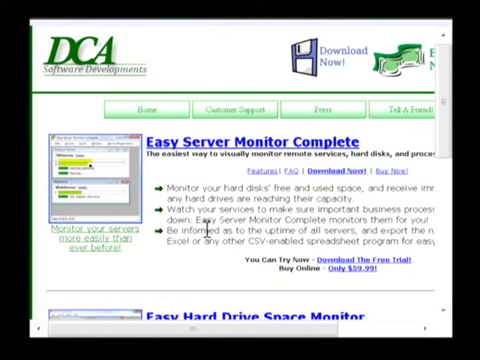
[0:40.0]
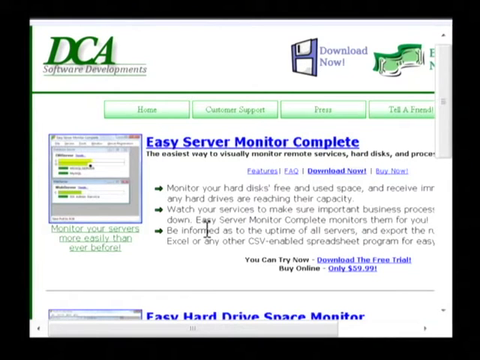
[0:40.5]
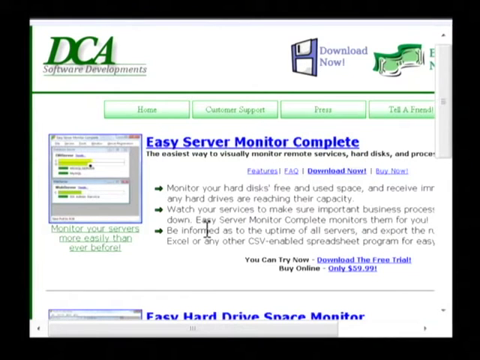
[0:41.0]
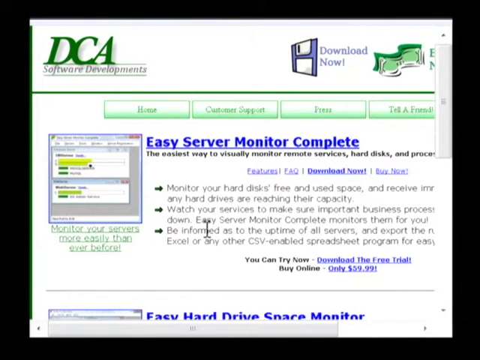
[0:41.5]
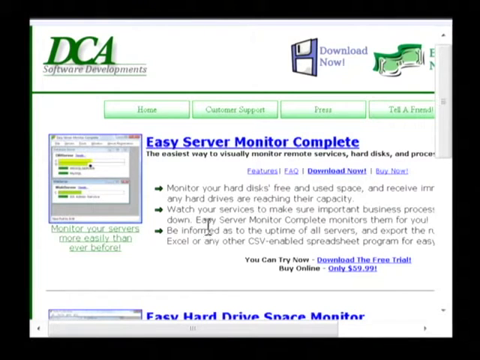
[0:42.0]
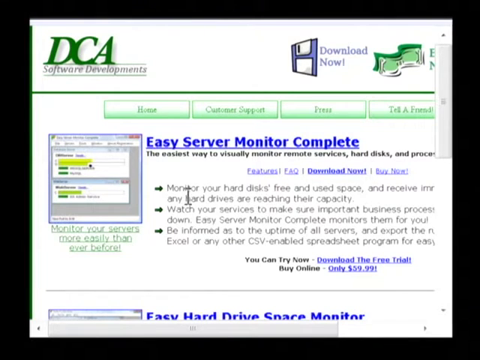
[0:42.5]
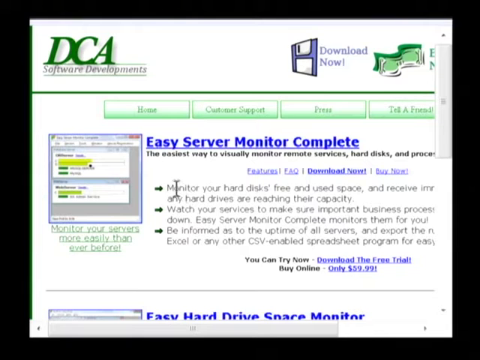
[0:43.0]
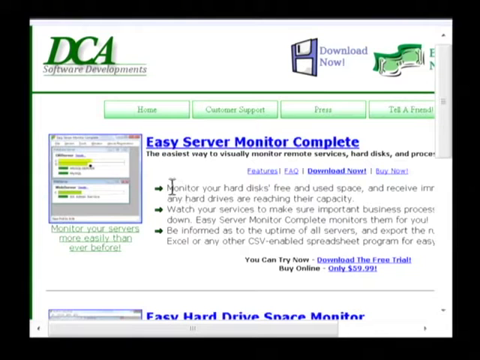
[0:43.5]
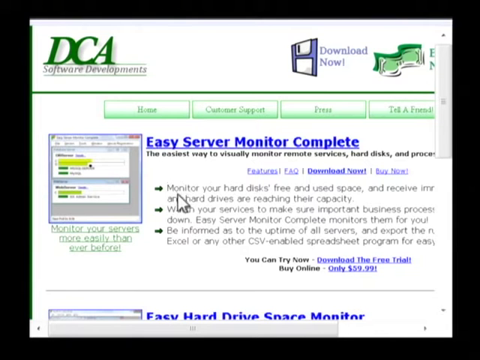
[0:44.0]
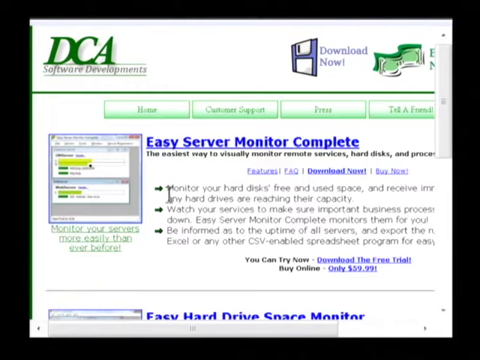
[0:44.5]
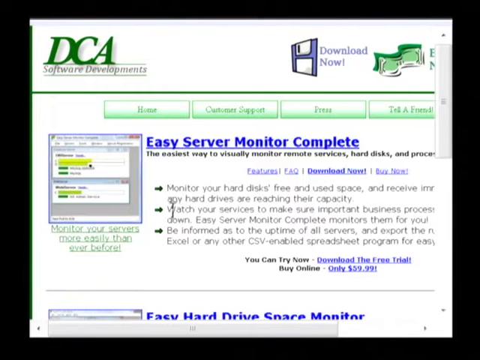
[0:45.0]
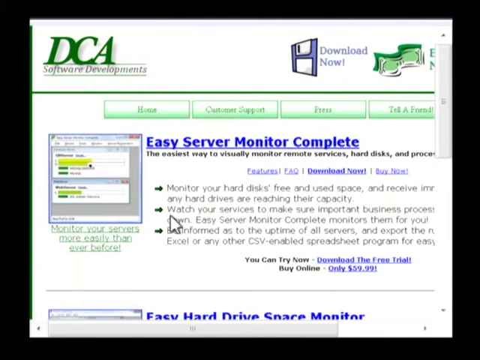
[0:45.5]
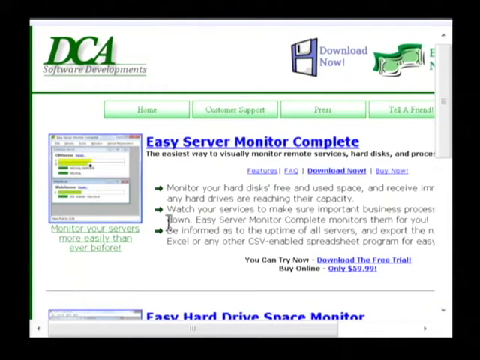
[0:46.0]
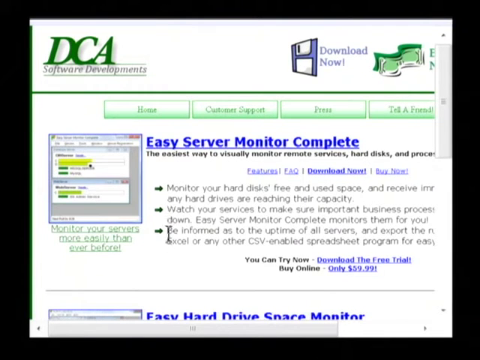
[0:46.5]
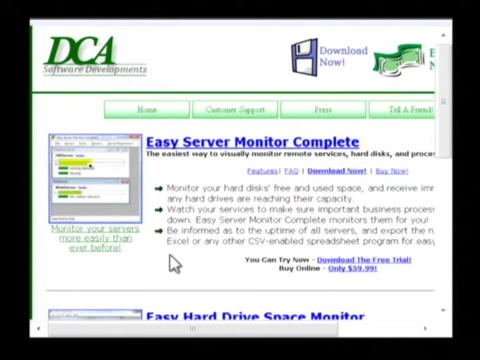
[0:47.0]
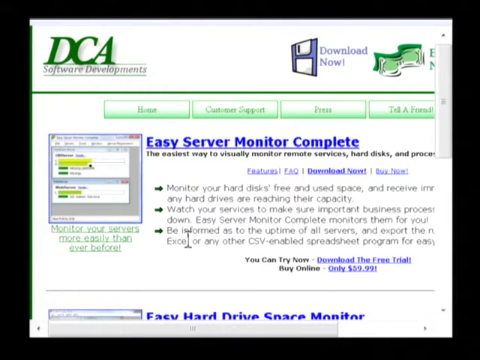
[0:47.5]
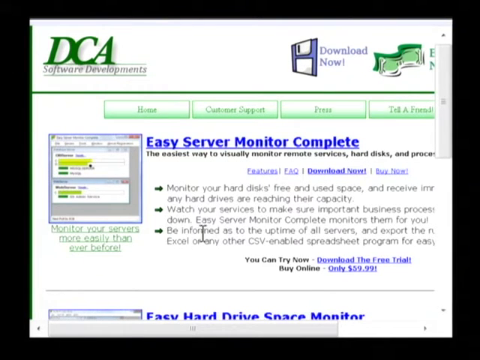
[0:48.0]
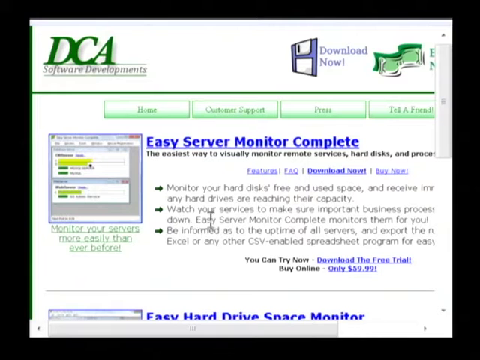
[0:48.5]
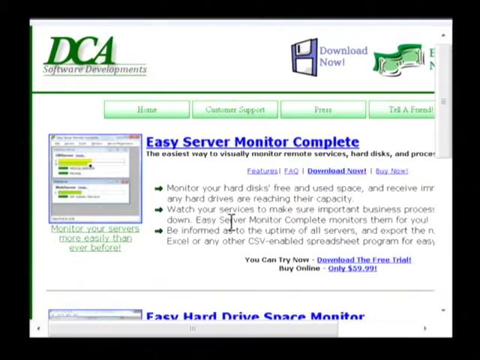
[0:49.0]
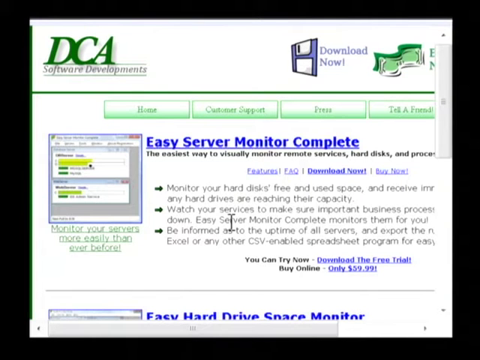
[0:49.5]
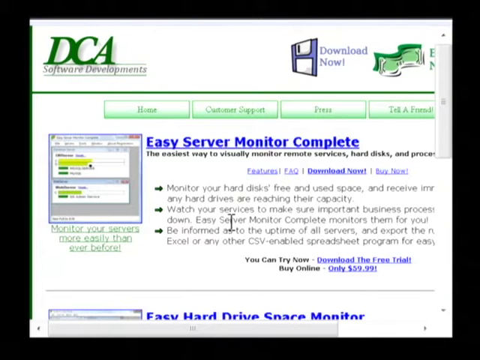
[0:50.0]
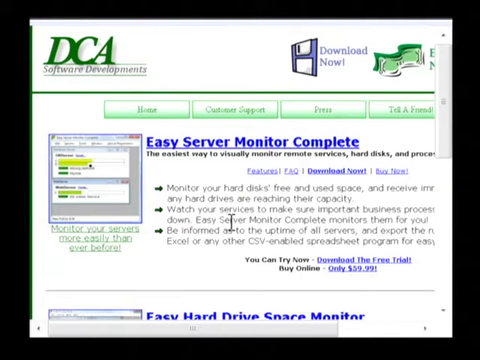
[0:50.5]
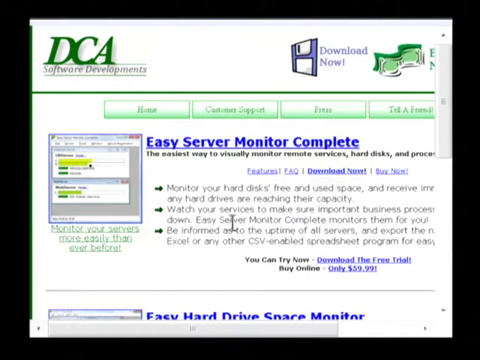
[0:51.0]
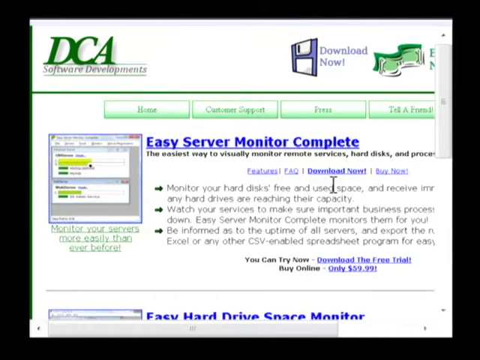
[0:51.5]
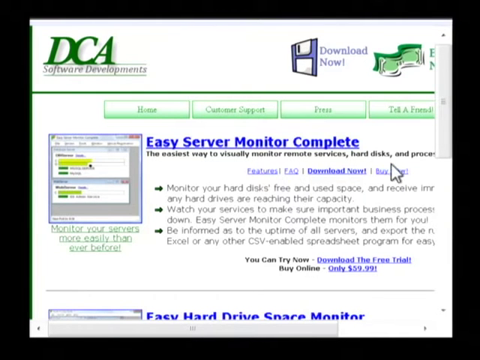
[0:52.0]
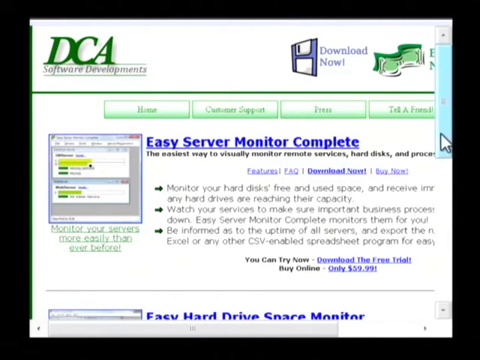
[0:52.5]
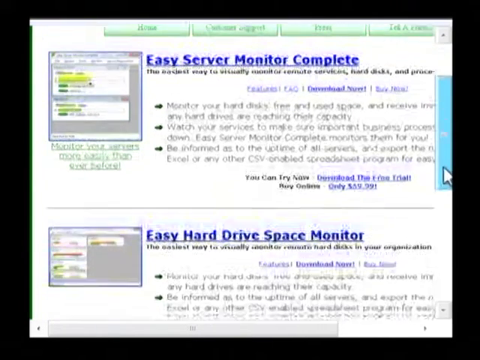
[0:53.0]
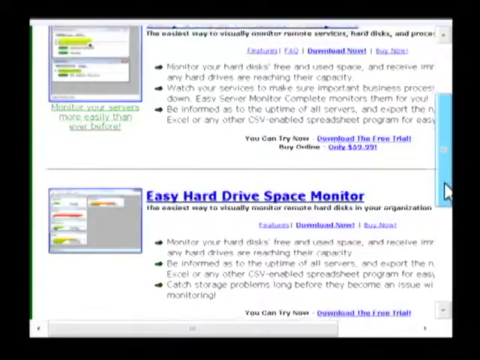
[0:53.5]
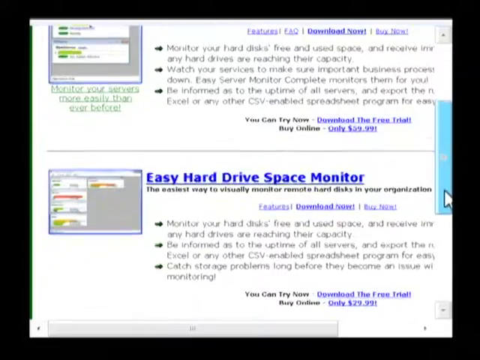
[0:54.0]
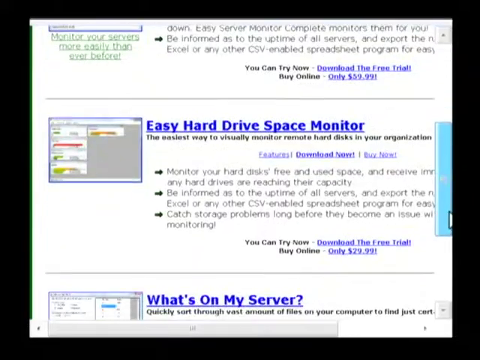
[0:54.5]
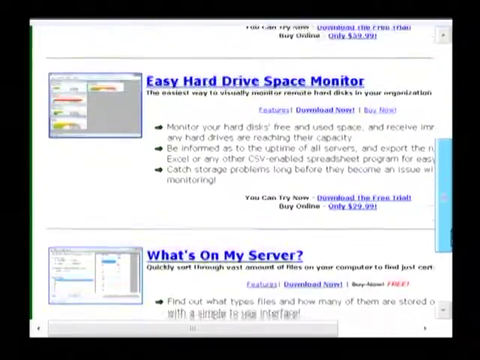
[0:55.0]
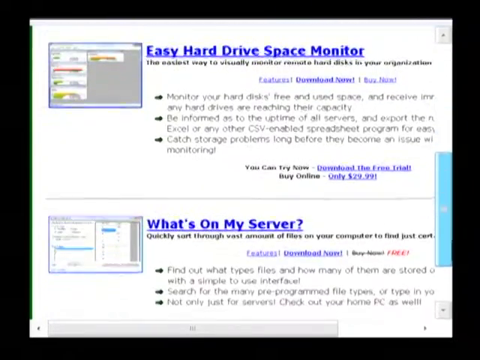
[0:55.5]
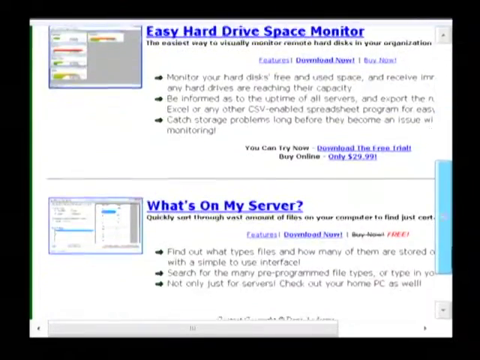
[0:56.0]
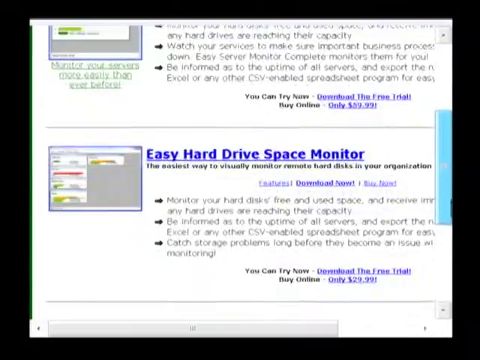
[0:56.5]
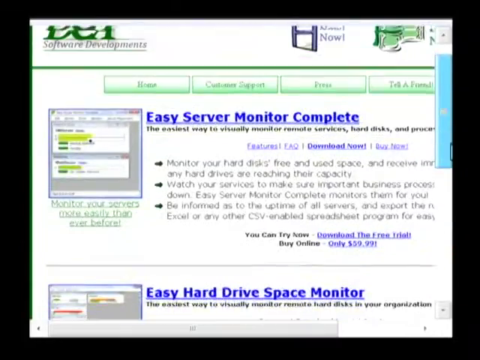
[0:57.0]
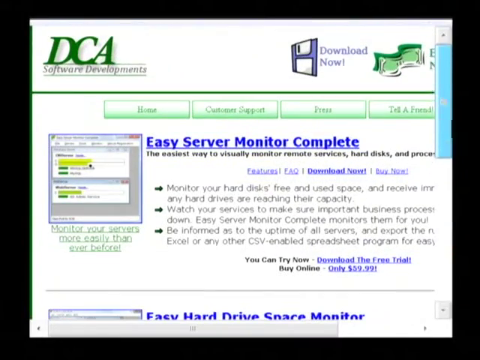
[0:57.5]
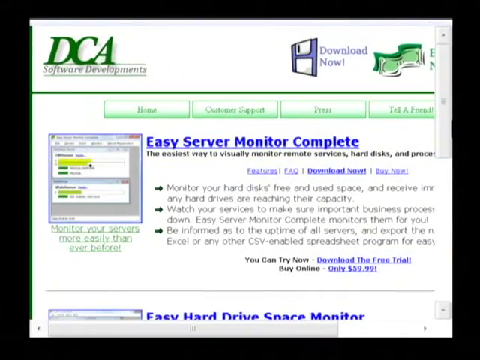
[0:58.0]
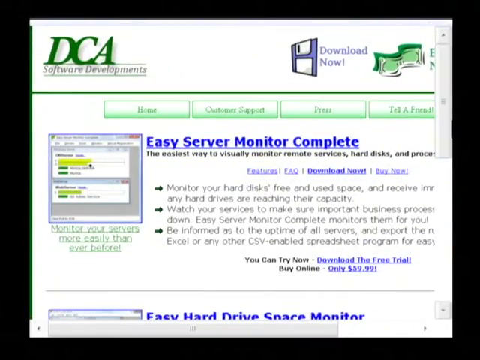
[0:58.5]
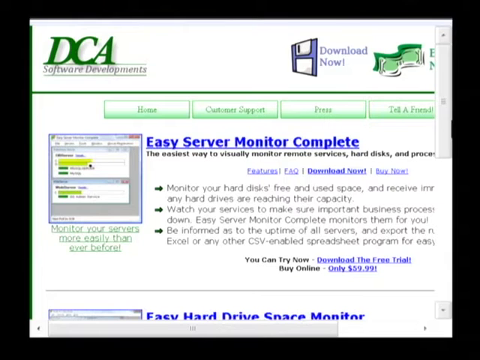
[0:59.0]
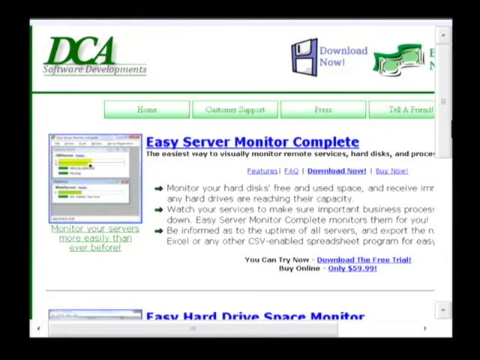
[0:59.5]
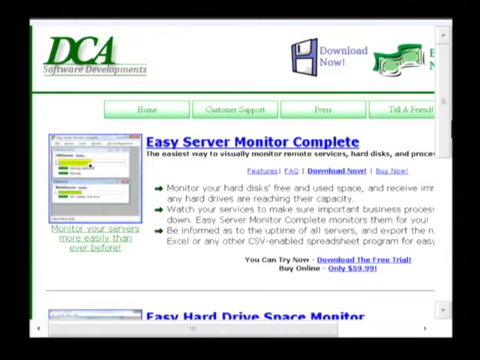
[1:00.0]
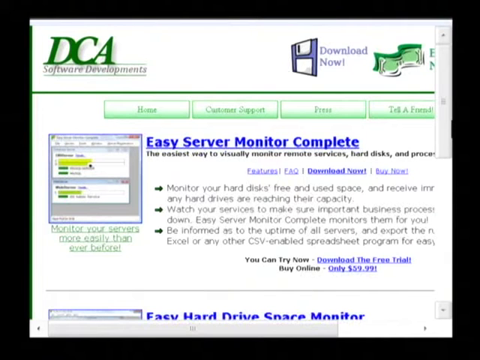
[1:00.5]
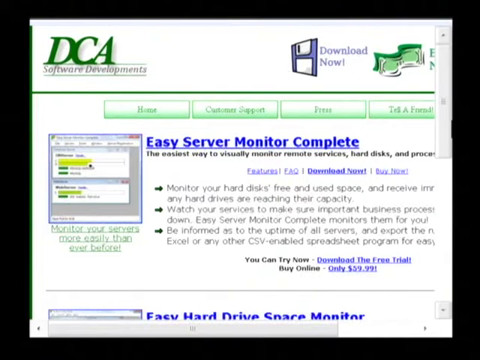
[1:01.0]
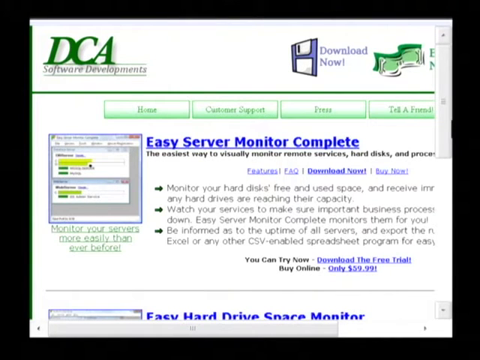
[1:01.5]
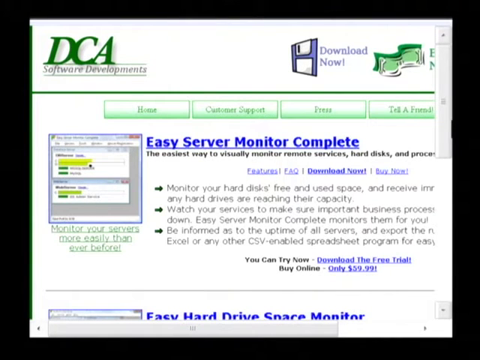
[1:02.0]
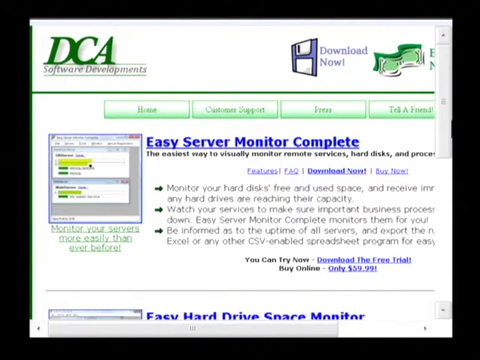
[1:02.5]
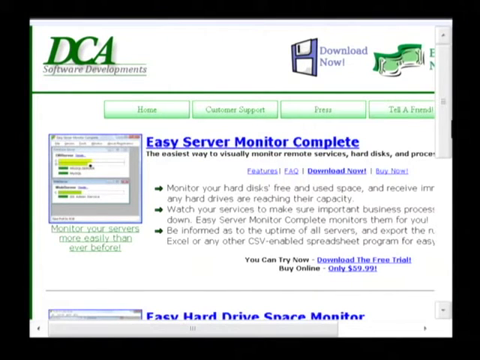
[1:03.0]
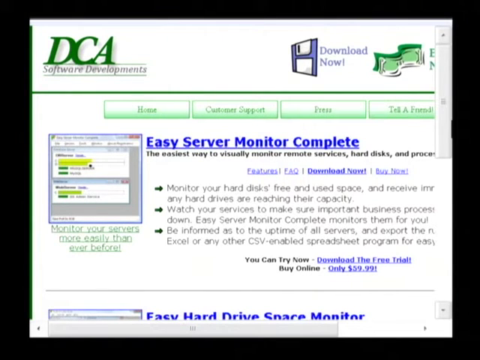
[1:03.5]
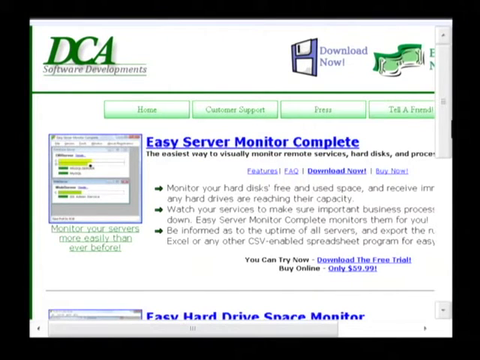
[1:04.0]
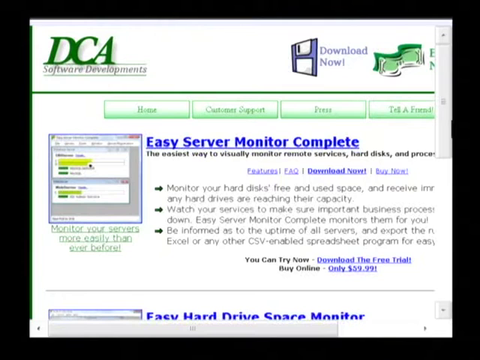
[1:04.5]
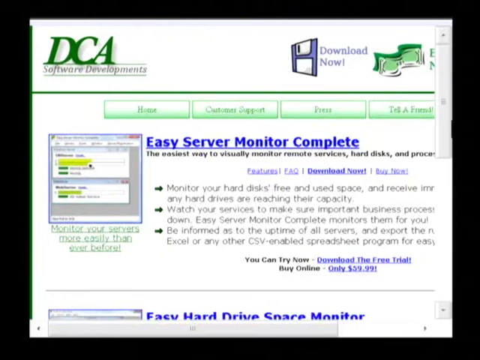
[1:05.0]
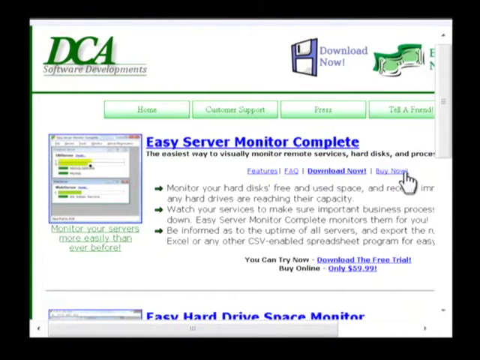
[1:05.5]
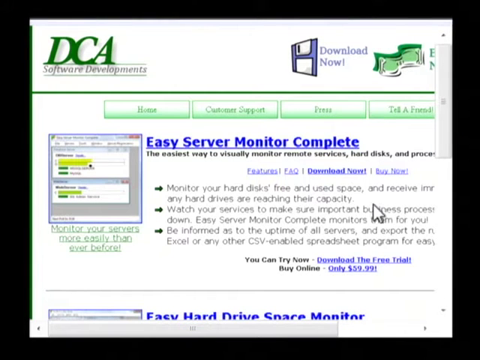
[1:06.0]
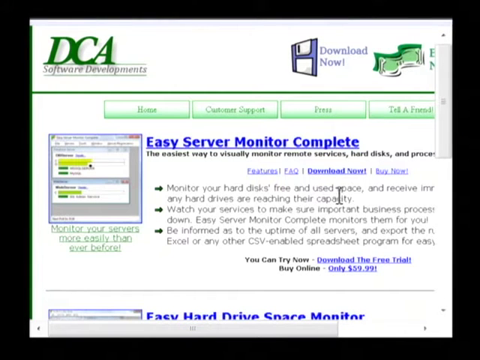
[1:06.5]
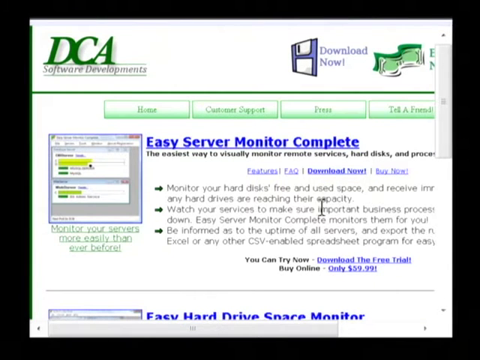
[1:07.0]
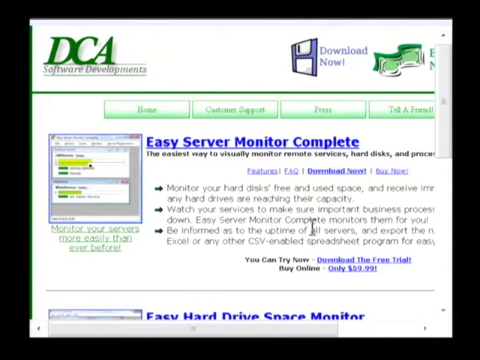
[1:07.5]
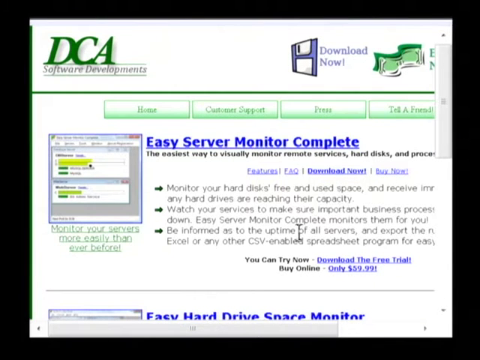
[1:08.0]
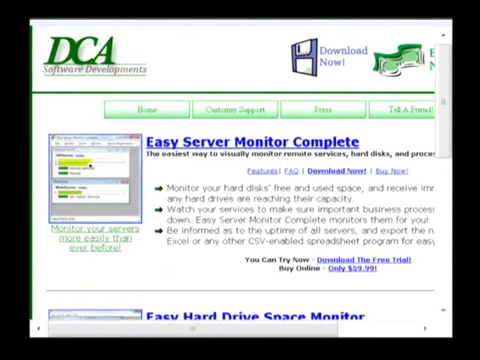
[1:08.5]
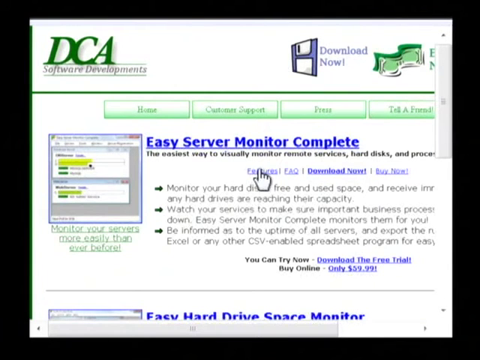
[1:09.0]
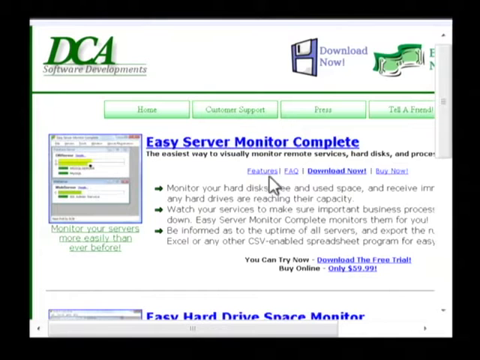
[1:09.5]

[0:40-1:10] A white page shows "DCA software development" in the top left corner and "download now" at the top on the right-hand side. Underneath is the title "easy server monitor complete" in blue, underlined writing, with lots of information beneath it, including "The easiest way to visually monitor remote services hard disk". He hovers the cursor over the wording, then goes to the right-hand side bar at the top, which highlights blue, and scrolls all the way down the page. He brings the page back to the top and hovers the cursor over the top title, then the page jerks a little, going slightly uneven and wobbling as though the cursor has lost control.